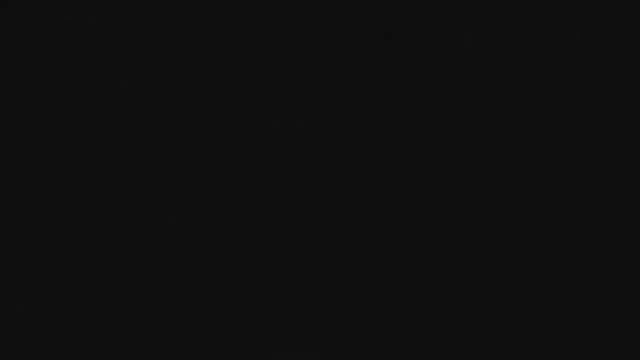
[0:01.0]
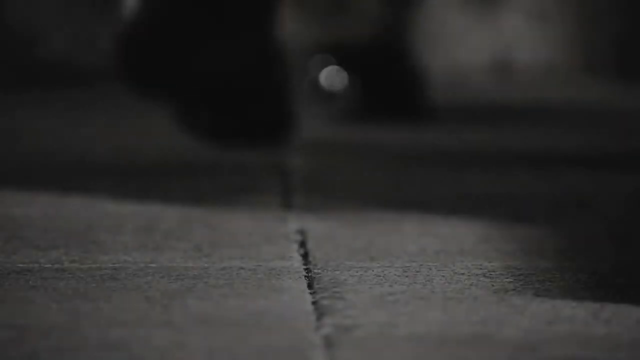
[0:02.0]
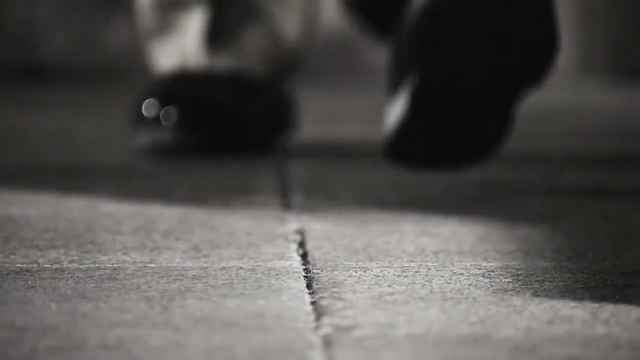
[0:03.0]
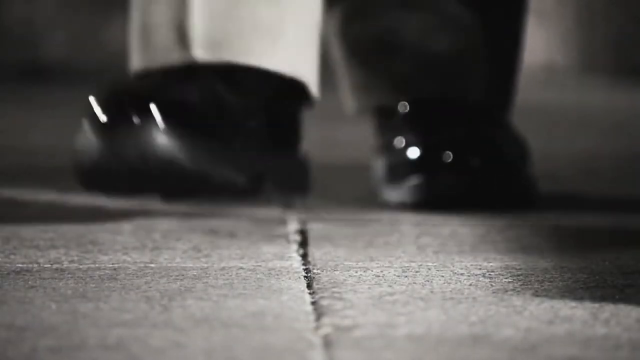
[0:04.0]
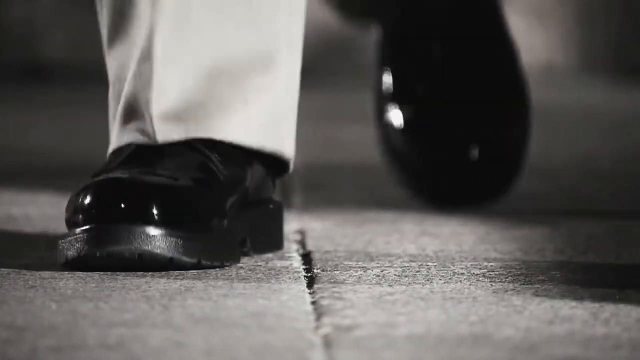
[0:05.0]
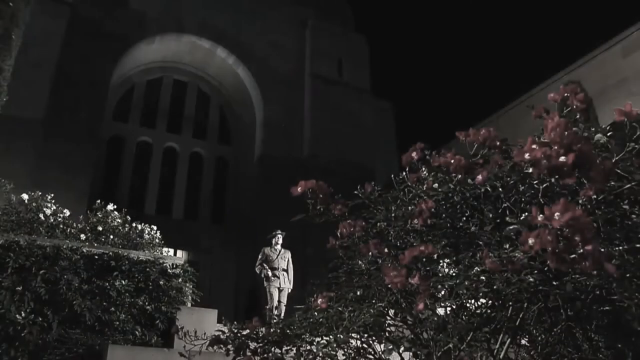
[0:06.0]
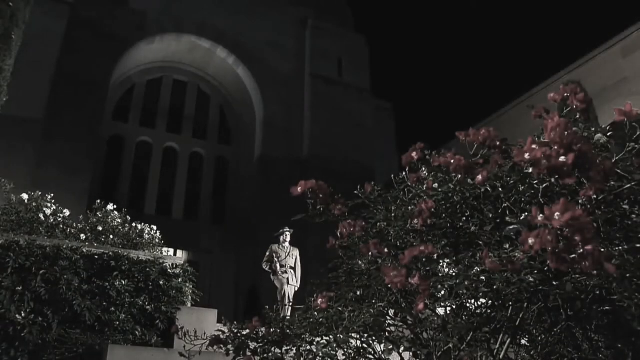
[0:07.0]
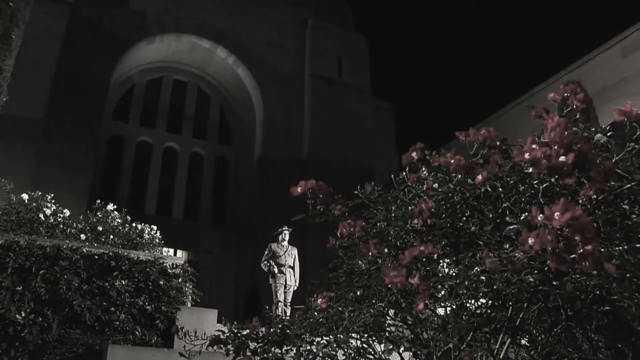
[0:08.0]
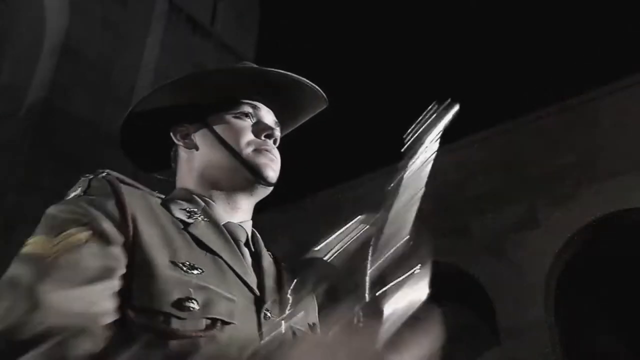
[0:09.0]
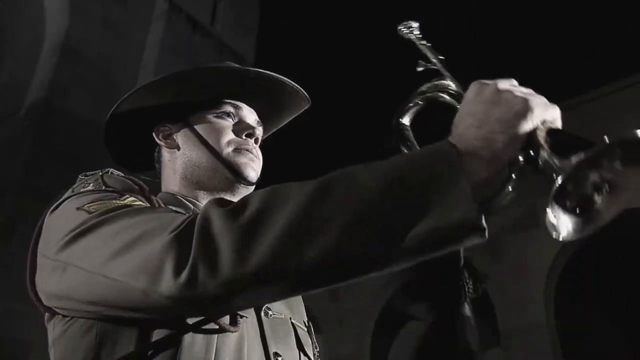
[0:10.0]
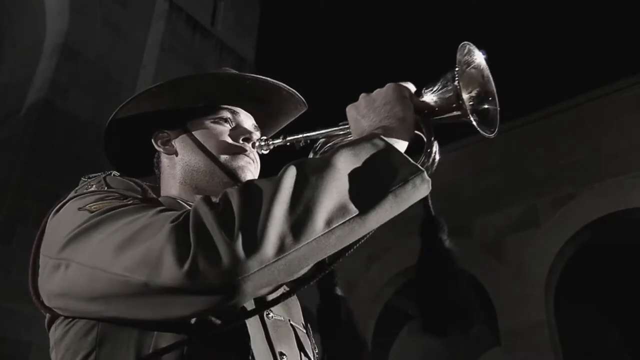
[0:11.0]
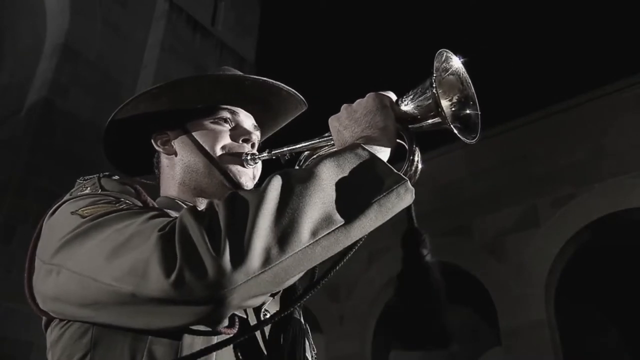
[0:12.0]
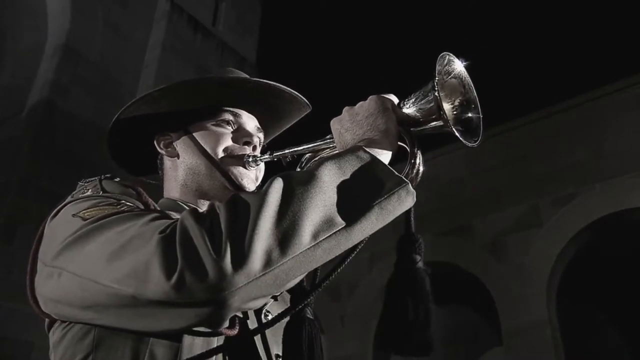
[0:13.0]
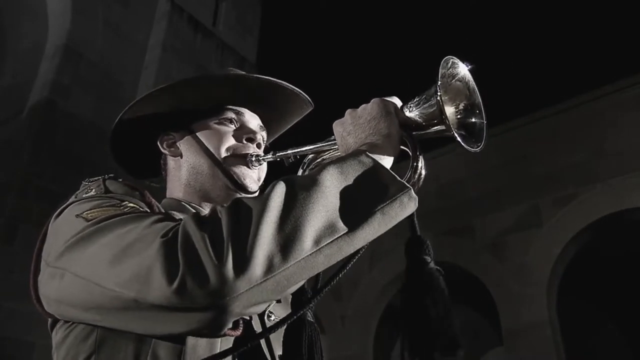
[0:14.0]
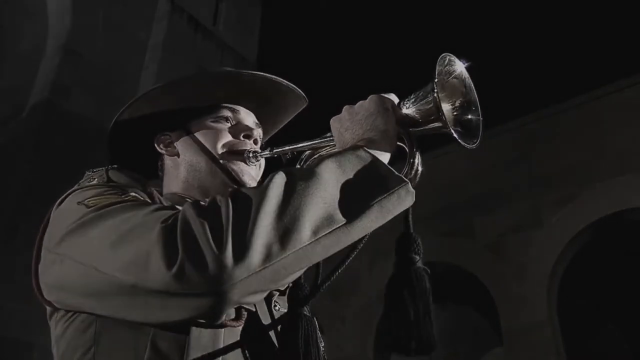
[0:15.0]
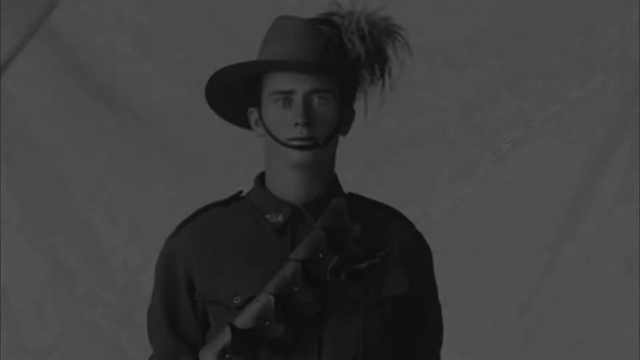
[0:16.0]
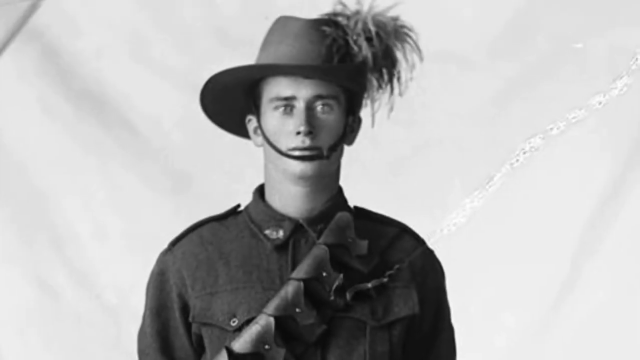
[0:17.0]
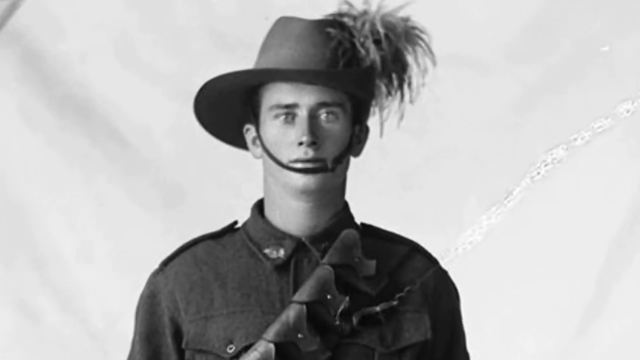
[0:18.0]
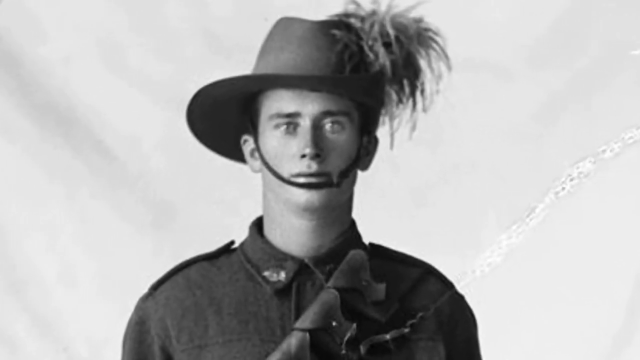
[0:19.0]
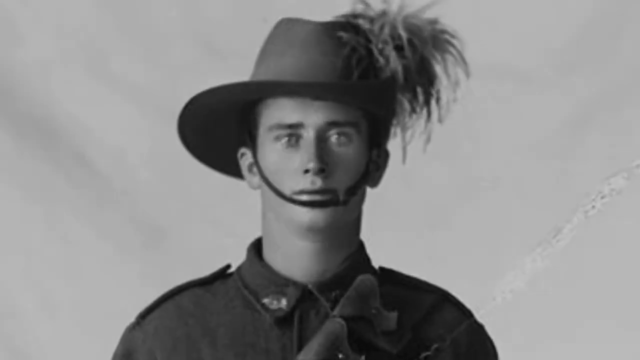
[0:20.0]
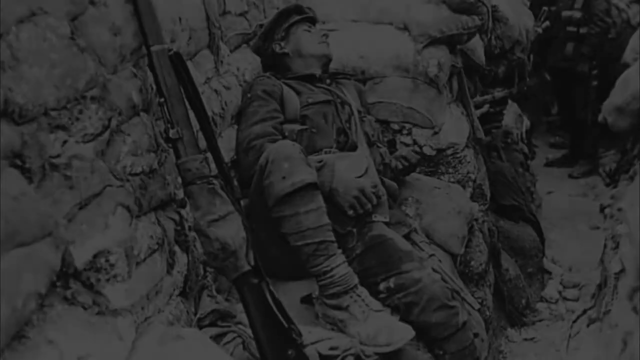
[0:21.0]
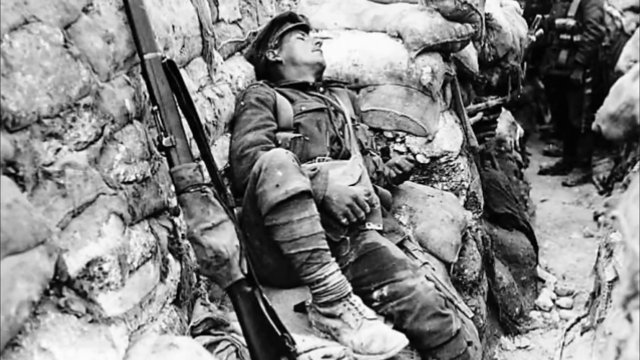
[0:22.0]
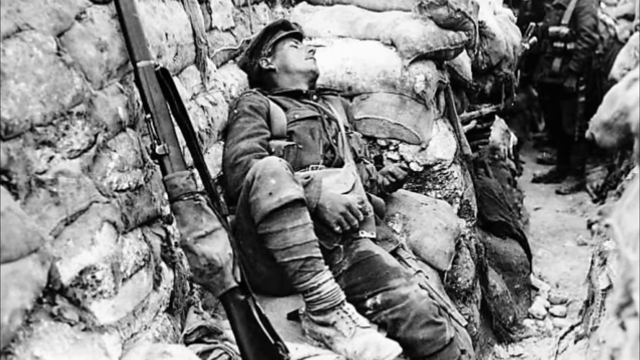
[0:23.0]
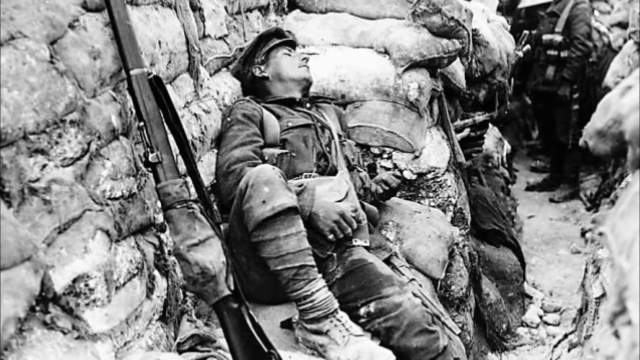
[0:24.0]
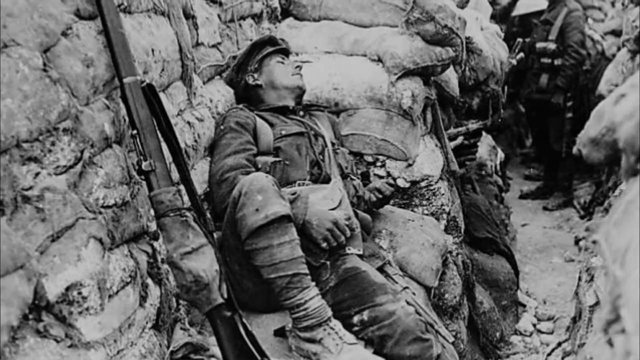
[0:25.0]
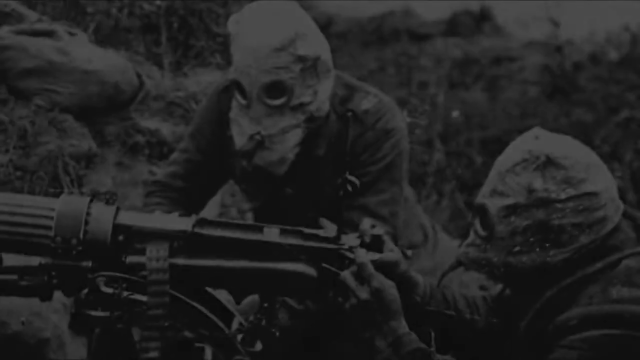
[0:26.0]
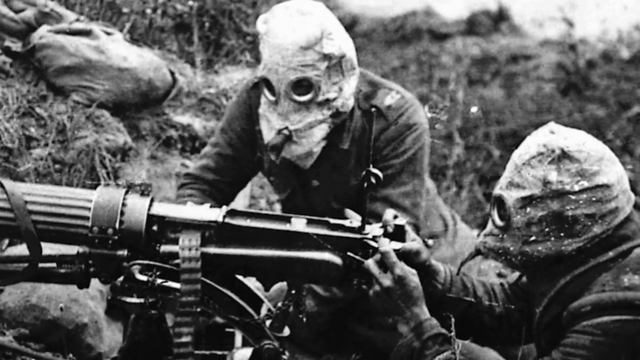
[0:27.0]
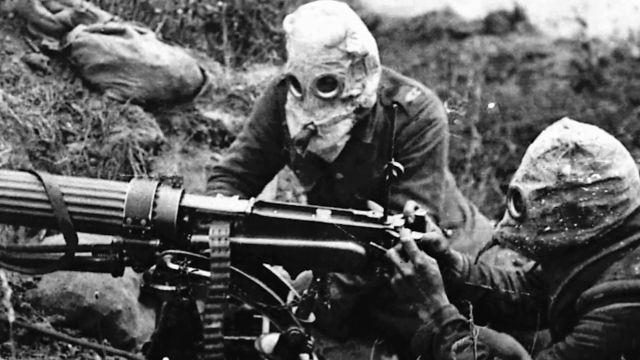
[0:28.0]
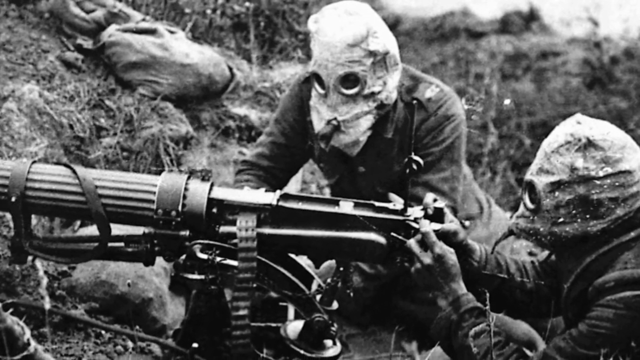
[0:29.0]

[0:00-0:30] A man's feet walk along a sidewalk. He wears very shiny black dress shoes and gray dress slacks that go all the way down past his ankles. The sidewalk is a lighter gray and has a seam down the center. The feet stop as the view pans to a nighttime scene with what looks like a church in the background, a large stone building with a large arched window. At the bottom left and right are shrubberies covered in flowers: the one on the left has white flowers and the one on the right has red flowers. A man stands in the center, apparently dressed in military garb. He is Caucasian and is a hornblower; wearing a hat, he raises the trumpet to his lips with his right hand and blows. The view then pans to a black and white image of a soldier in full military garb, wearing a hat folded up on the left side with a fluffy protruding feather underneath the fold at the top of the brim. The right side of the brim is out. The hat's strap comes down around his face and stops just under his bottom lip. He looks directly at the camera.